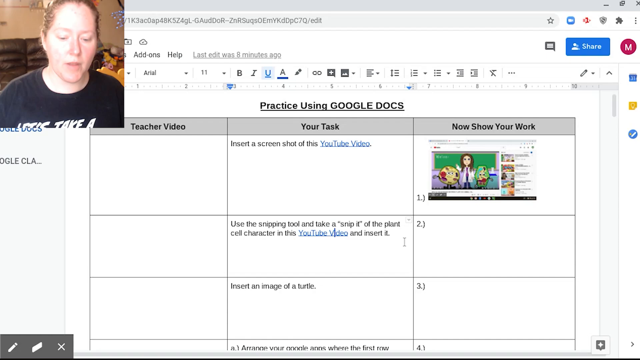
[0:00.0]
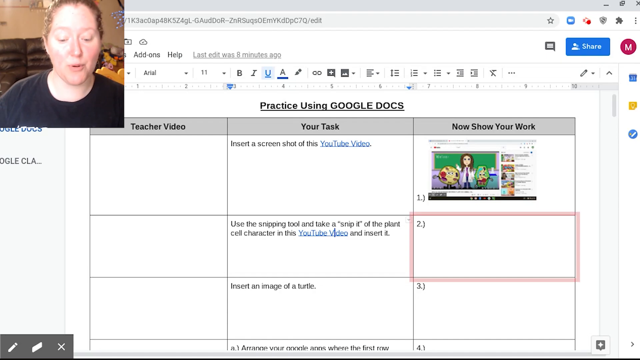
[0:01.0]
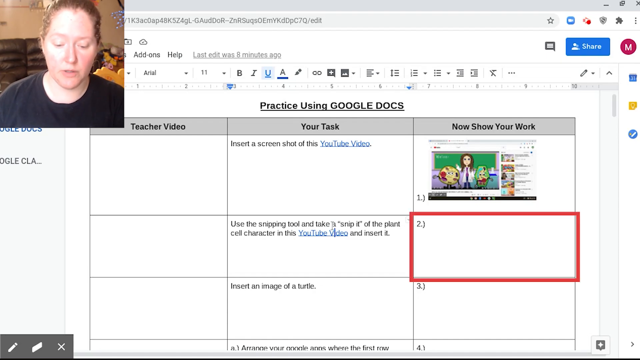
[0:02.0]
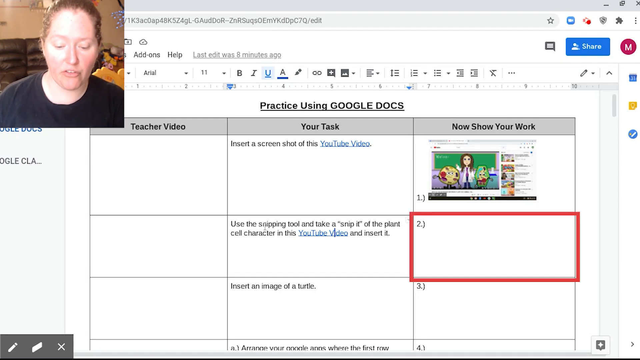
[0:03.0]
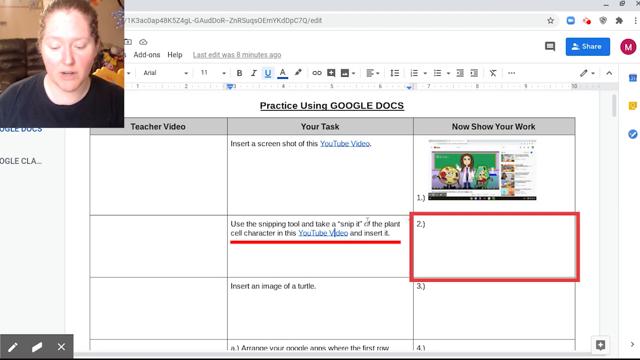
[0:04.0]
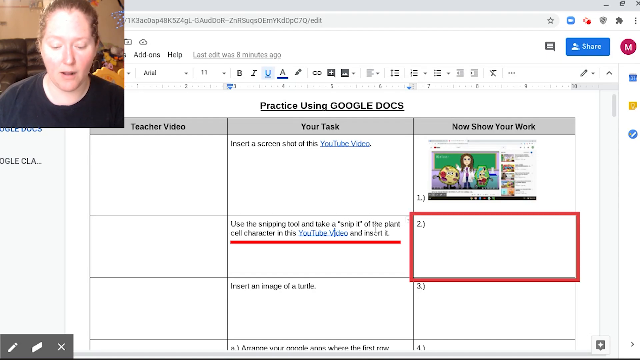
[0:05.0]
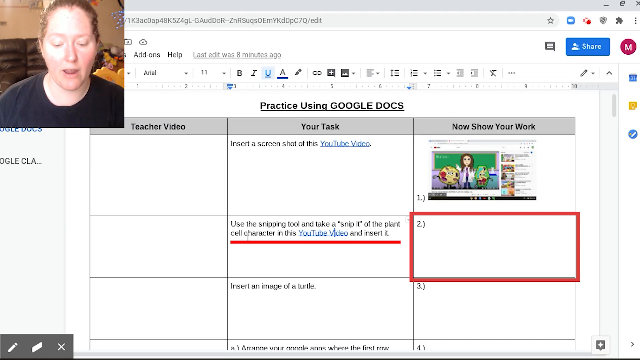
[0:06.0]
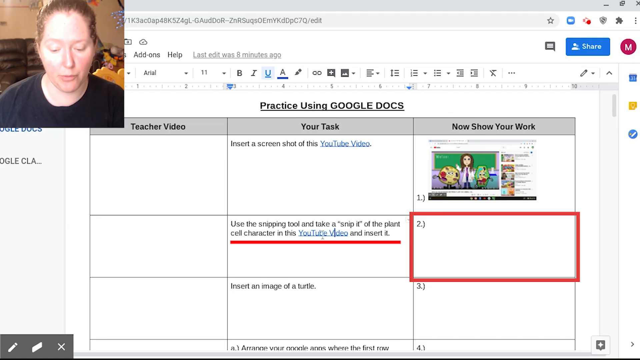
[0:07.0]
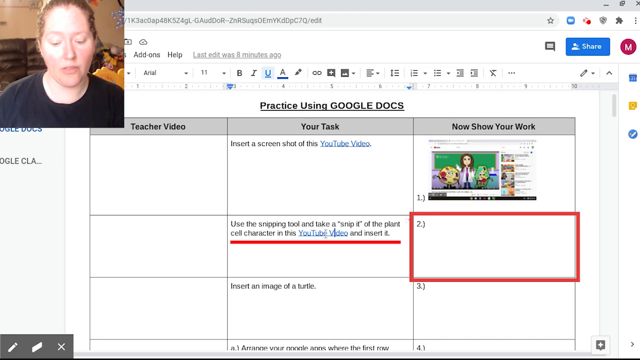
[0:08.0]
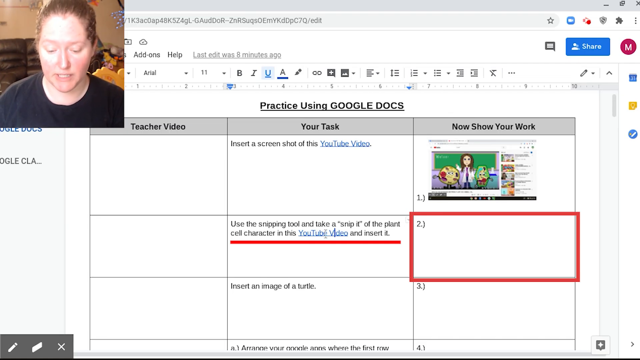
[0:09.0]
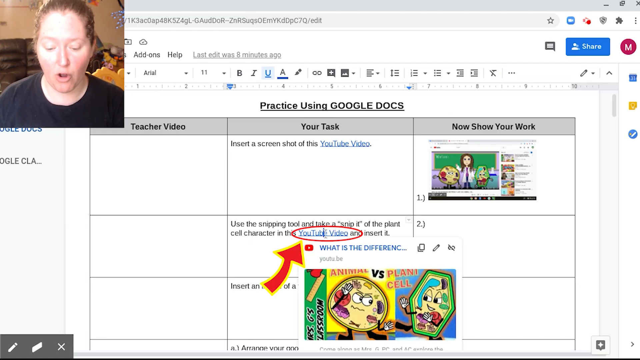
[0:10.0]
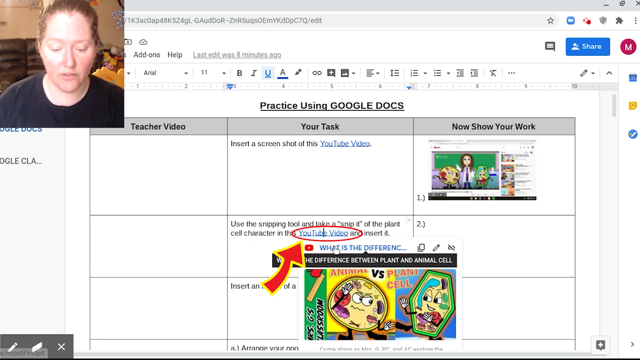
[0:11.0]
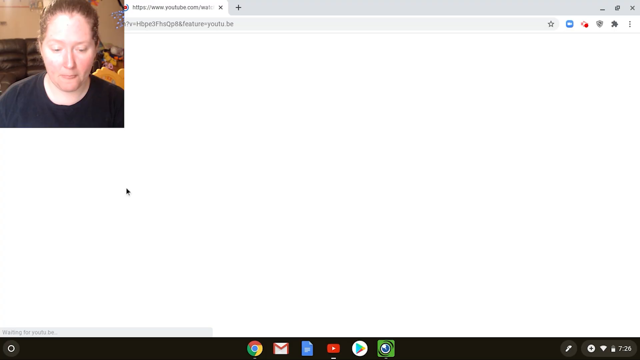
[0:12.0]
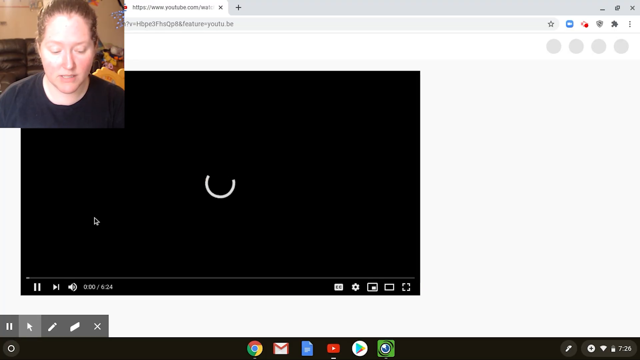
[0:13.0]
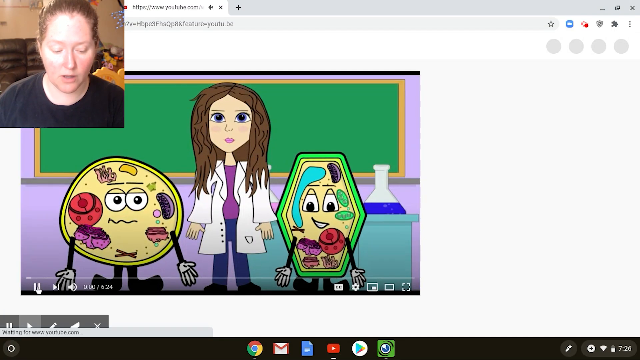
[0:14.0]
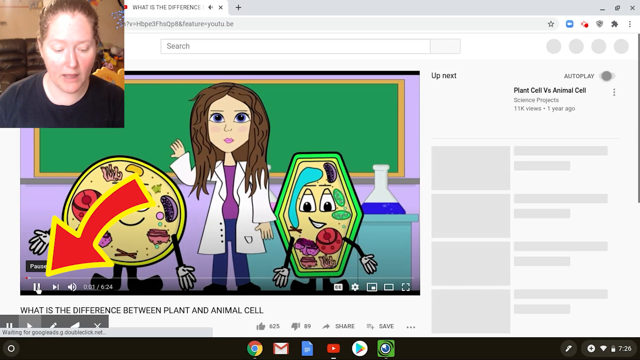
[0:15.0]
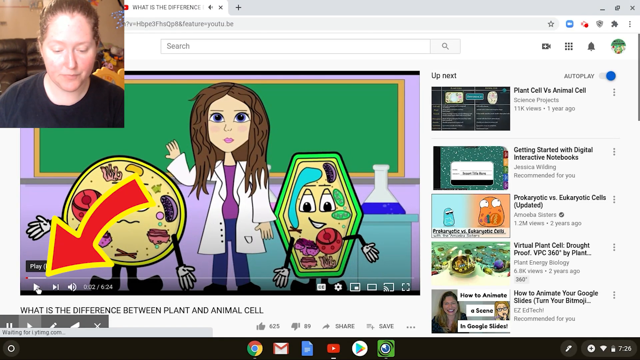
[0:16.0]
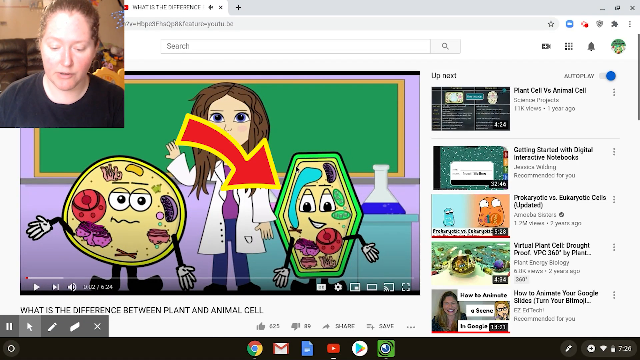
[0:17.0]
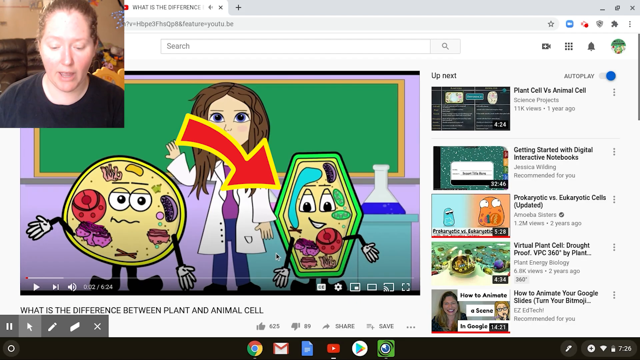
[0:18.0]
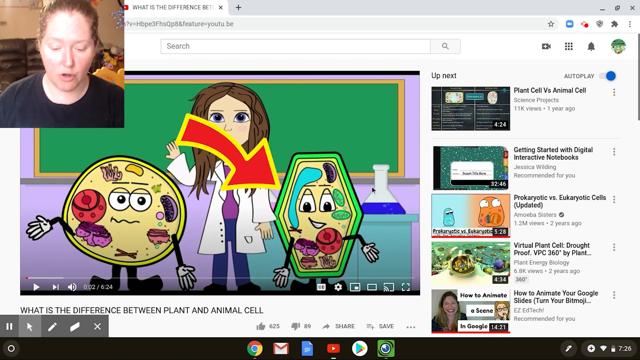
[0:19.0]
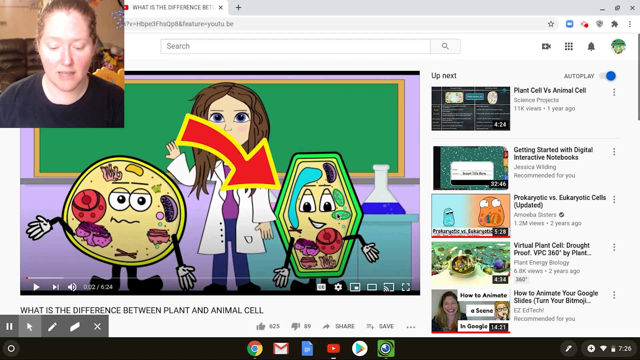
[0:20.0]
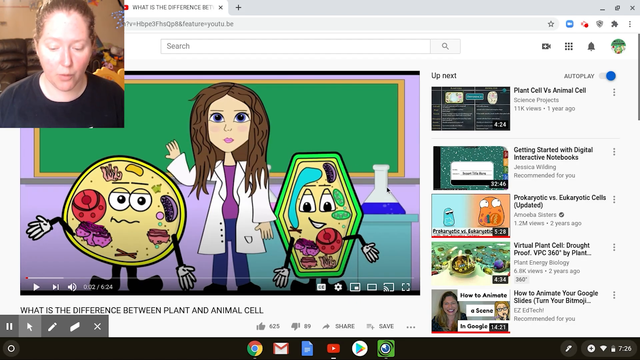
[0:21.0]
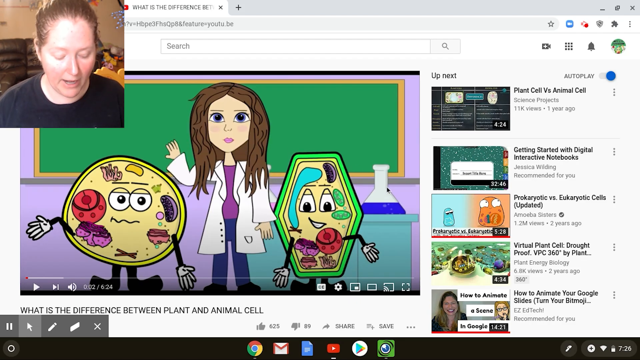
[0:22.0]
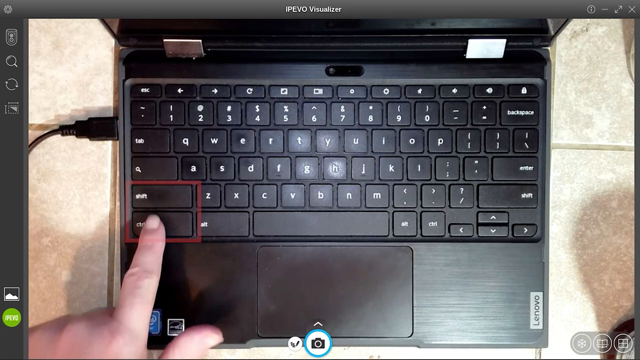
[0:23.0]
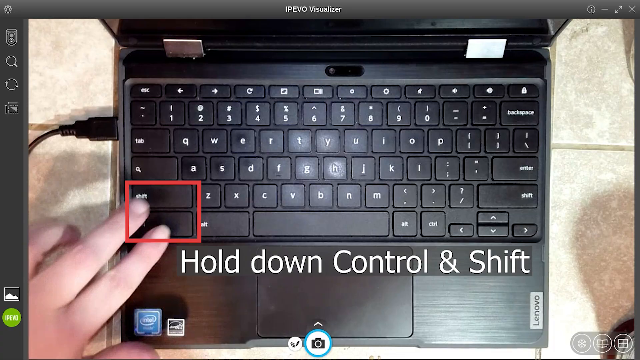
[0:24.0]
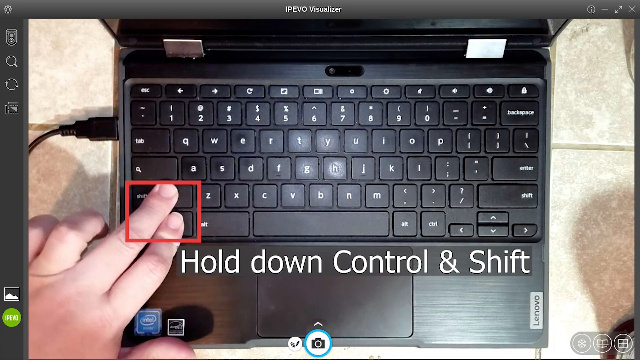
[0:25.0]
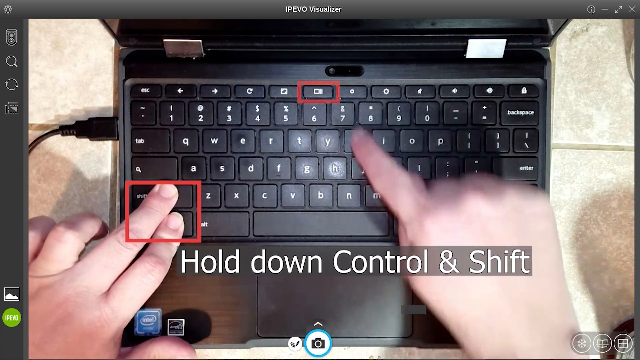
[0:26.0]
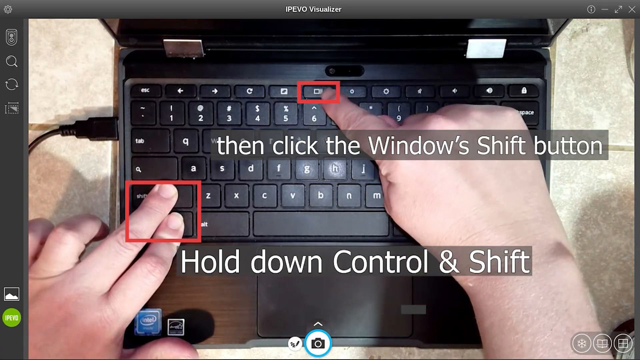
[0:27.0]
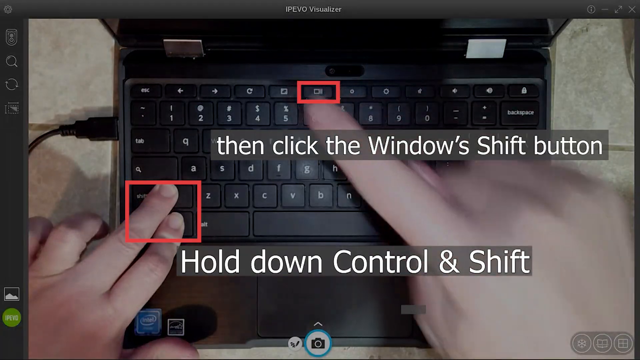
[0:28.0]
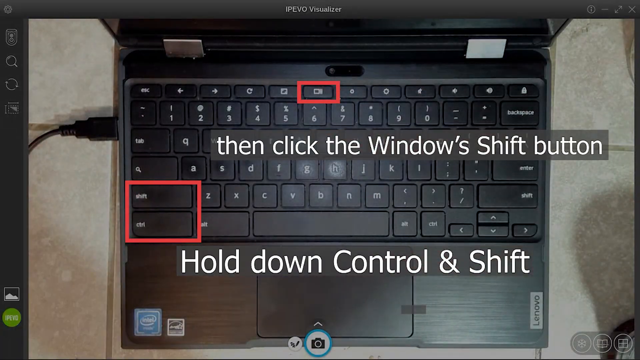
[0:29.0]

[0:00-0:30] What is apparently some sort of Google Docs practice program is on screen. A woman clicks on a video in the program; it is a link that goes to a cartoony animation of a woman in a lab coat and some cells. On the left is a very circular, yellow cell, and on the right is a green cell that is kind of hexagonal but really thin looking. Both cells have faces and look very cartoony. She then points the camera down to her keyboard, puts two fingers on the control and shift buttons, and then clicks the window shift button. Text then reads "the button above the six" as the view zooms in more on that particular button.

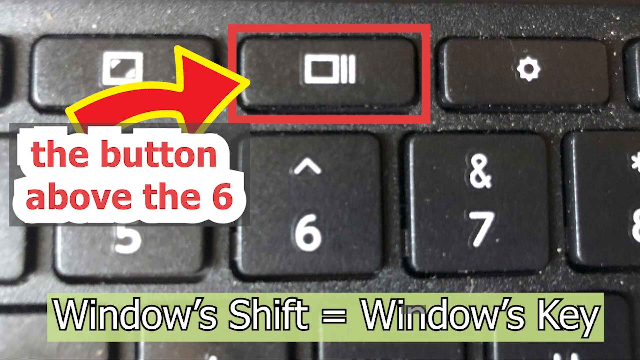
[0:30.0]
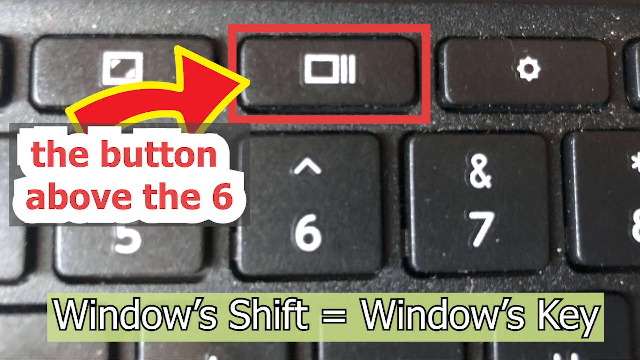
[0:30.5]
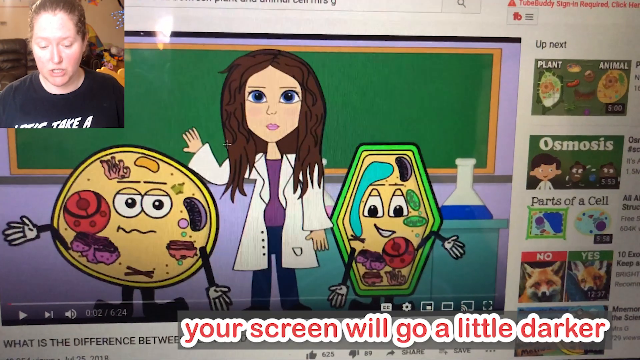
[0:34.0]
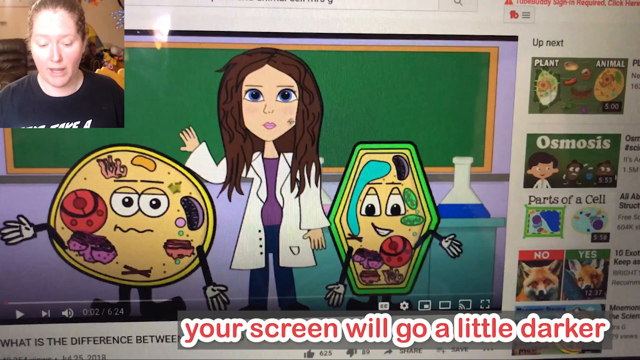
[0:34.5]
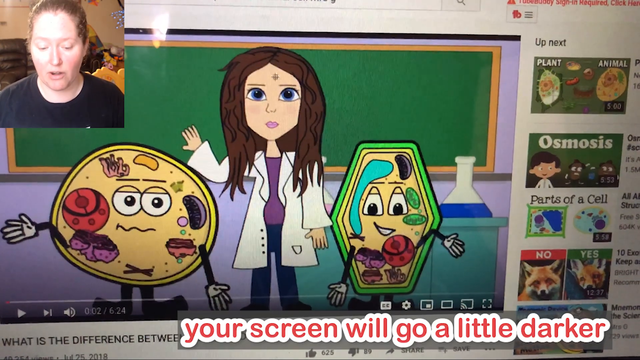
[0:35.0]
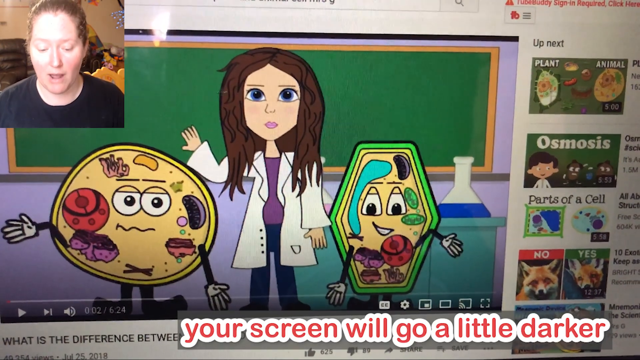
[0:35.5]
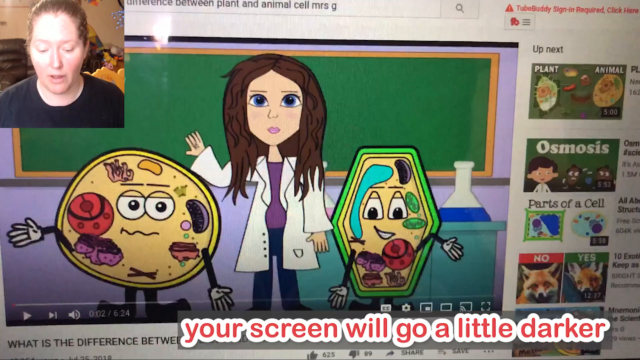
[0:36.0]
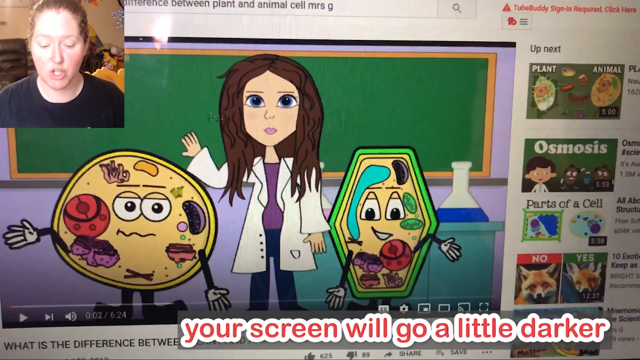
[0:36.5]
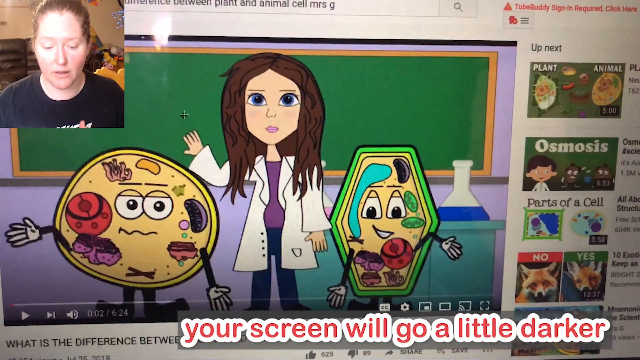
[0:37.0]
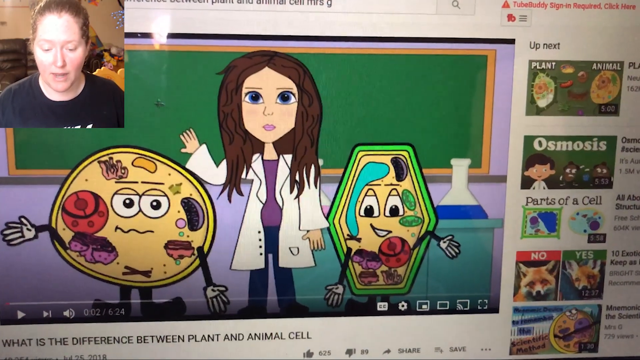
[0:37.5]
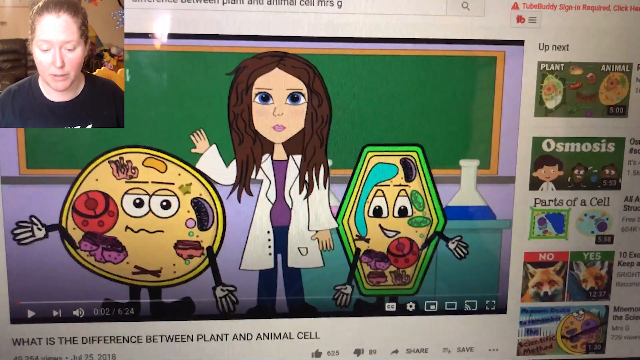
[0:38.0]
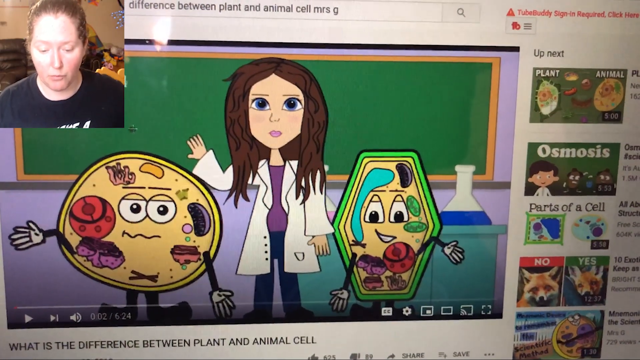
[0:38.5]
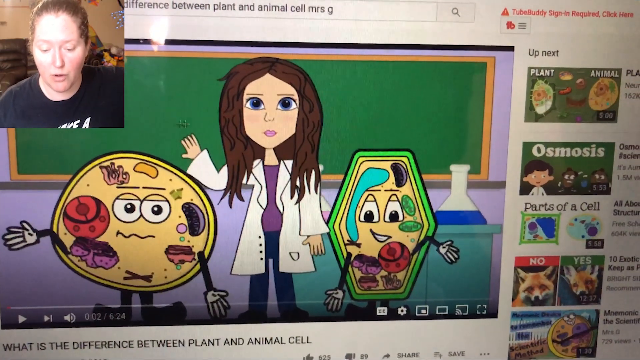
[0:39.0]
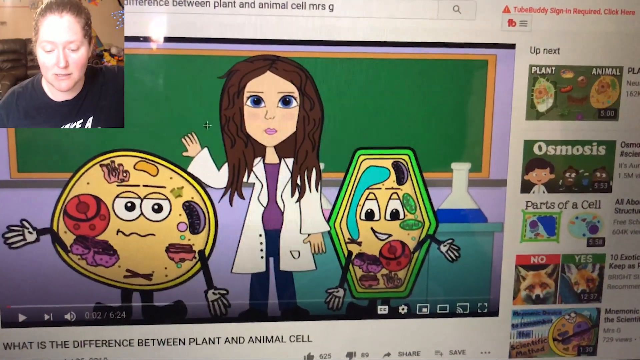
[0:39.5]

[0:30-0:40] A closer view shows where the Windows button is and what it looks like. Text at the bottom of the screen, in white on a light green background, reads "windows shift equals the windows key". At the bottom right, red text reads "your screen will go a little darker". The keyboard looks fairly clean and black, with a little bit of dust on it.